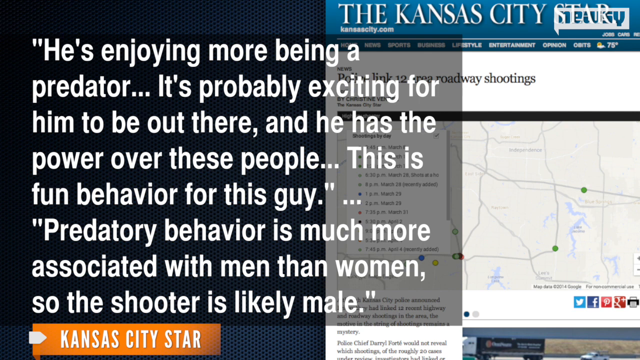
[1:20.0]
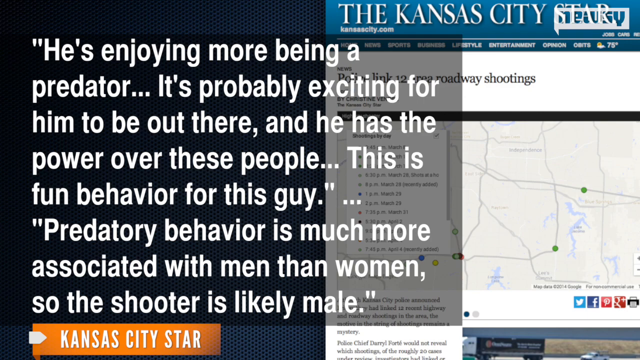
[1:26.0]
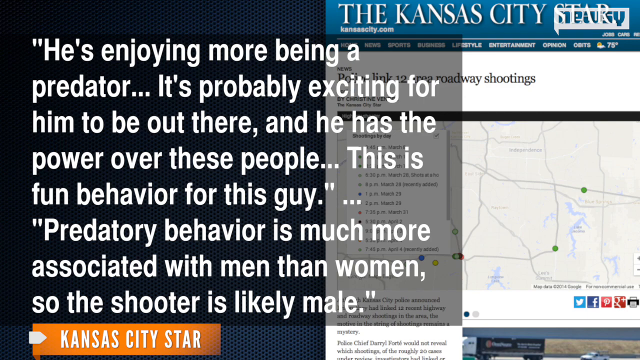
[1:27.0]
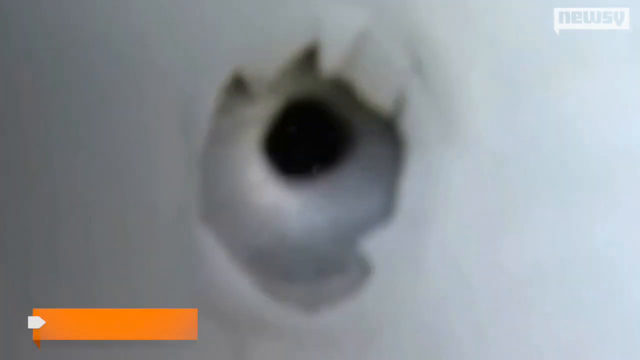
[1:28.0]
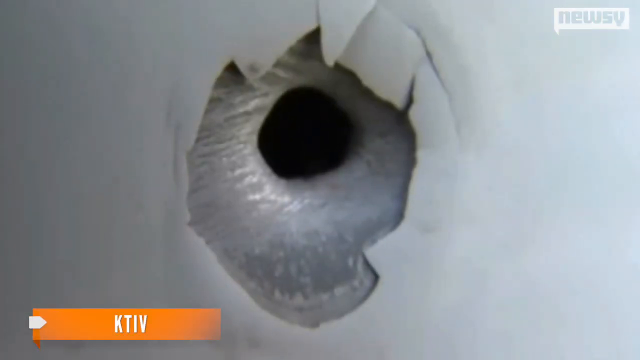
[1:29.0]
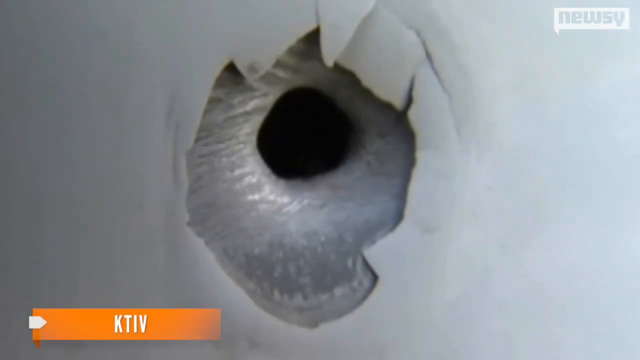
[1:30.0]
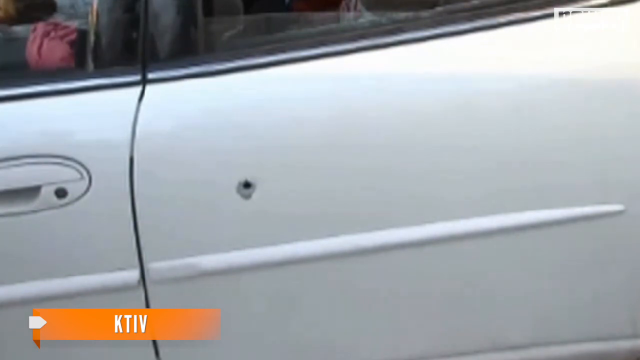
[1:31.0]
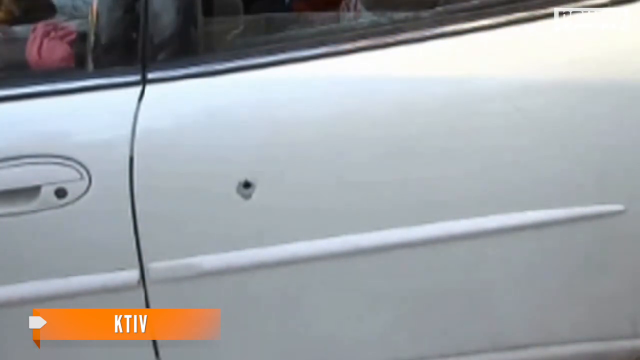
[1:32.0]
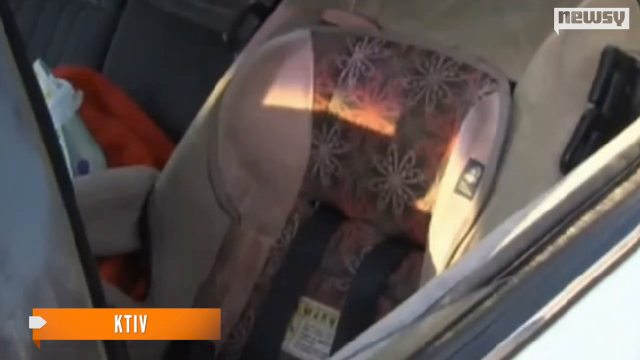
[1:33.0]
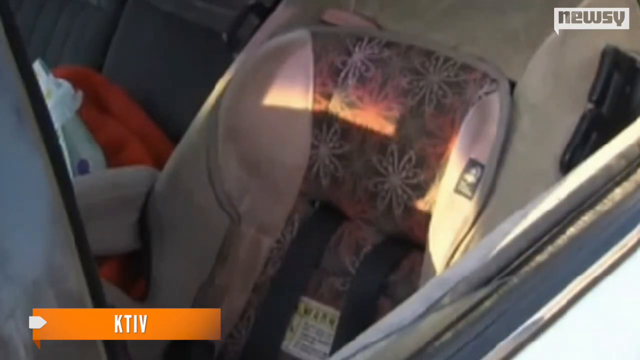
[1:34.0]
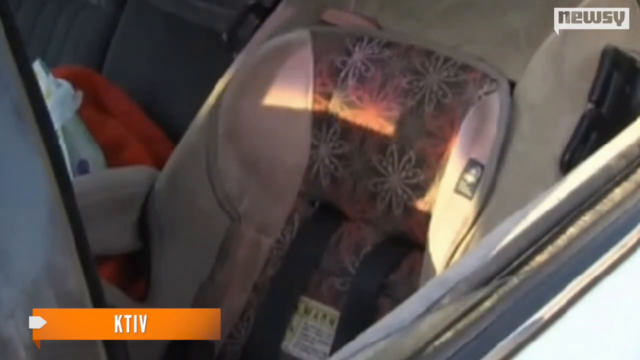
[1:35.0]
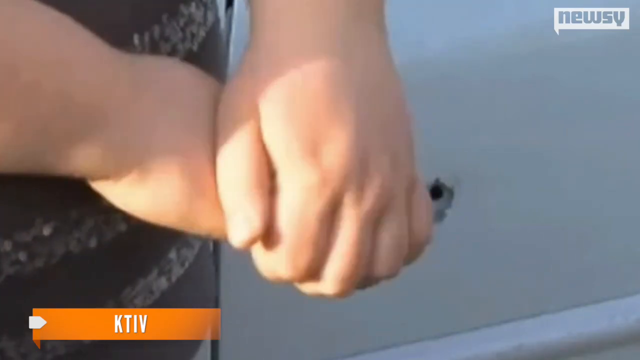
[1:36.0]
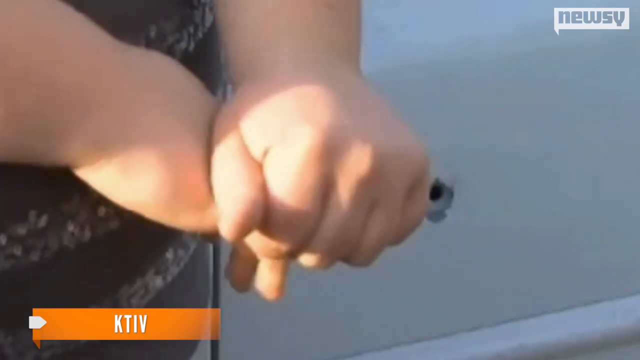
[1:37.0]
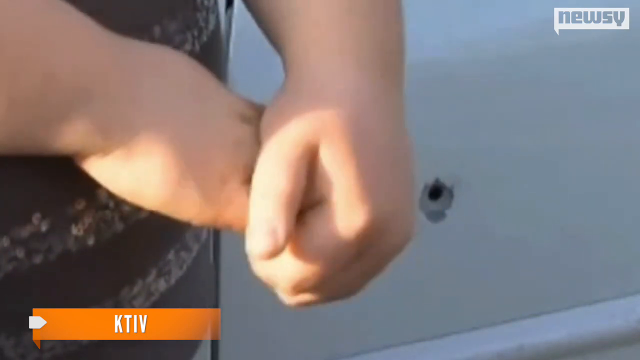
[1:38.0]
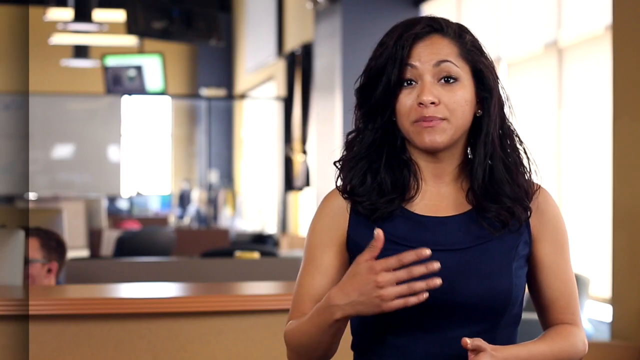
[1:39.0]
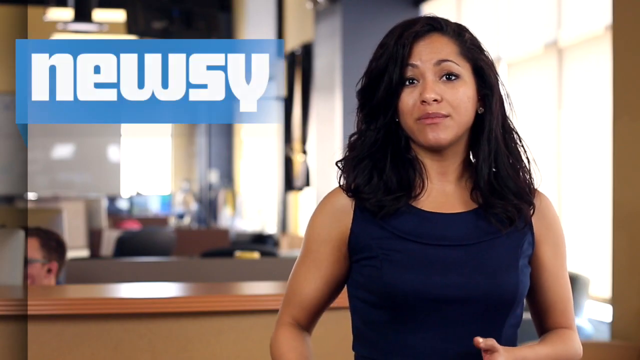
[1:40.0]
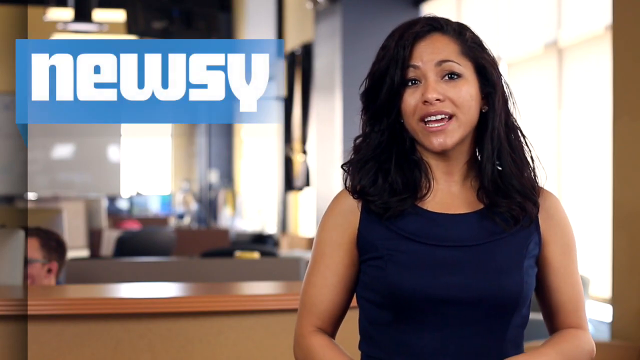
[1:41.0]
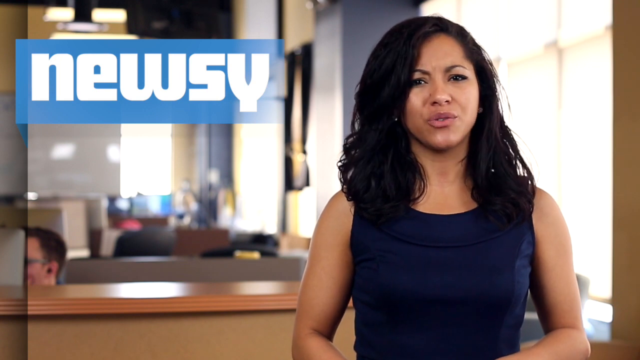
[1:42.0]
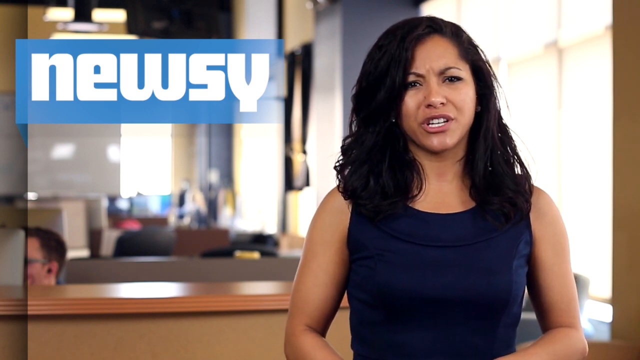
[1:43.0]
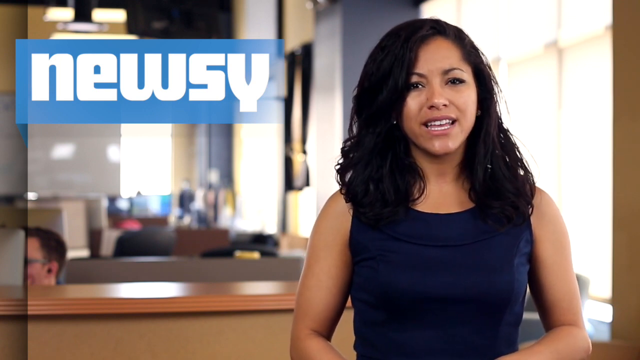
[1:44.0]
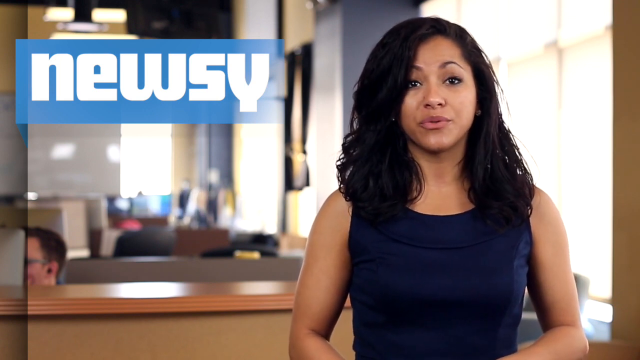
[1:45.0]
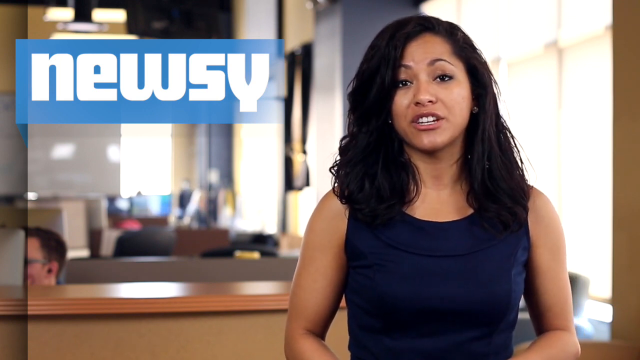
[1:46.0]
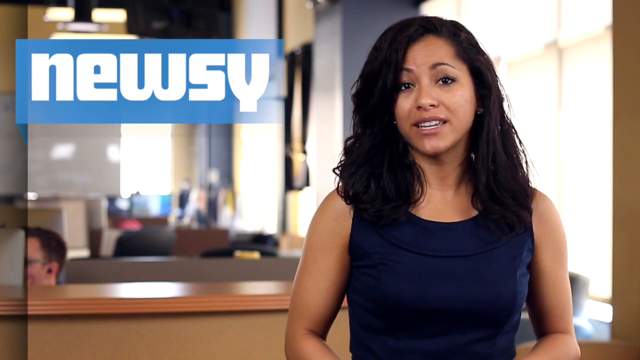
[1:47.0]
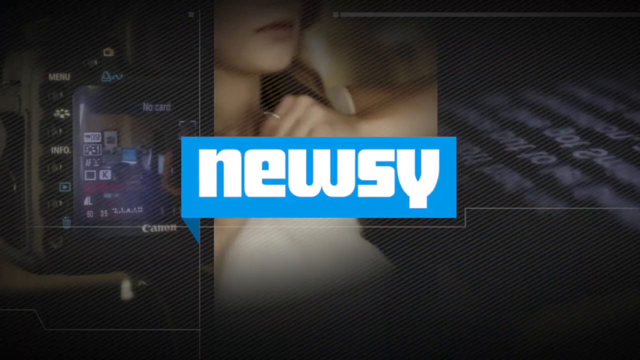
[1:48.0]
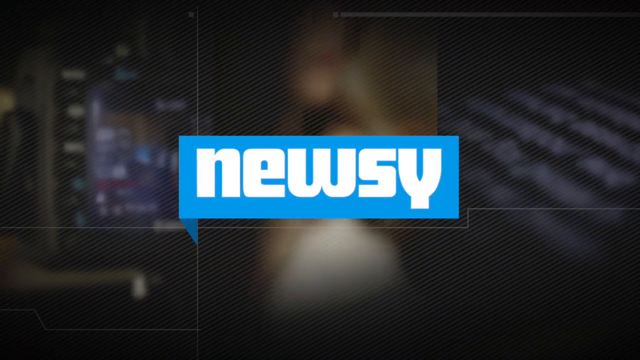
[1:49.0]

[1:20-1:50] The broadcast about at least a dozen linked highway shootings continues, with the name Newsy in the top right. An article from the Kansas City Star is shown, with writing that includes "predatory behavior is much more associated with men than women." A Kansas City Star headline reads "police link 12 area road shooting," followed by a map and images of the bullet holes in a vehicle and where the child was sitting. The broadcast returns to the newsroom, where Jasmine, in a blue dress, is on the right side with the same background of people working behind her.